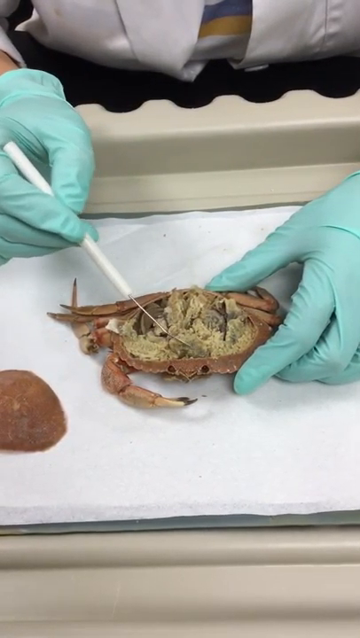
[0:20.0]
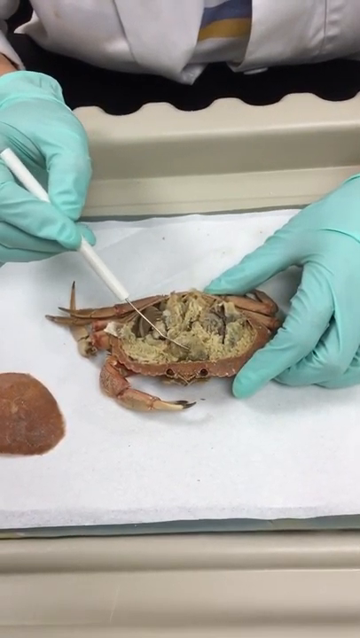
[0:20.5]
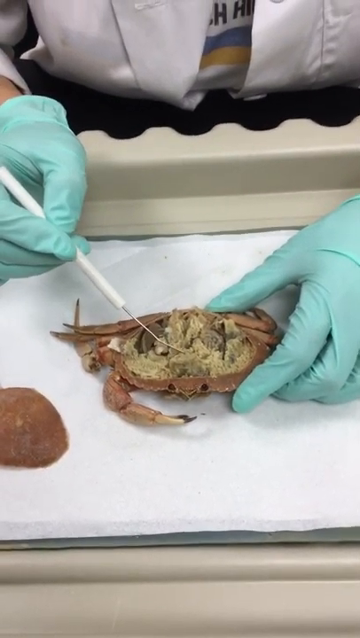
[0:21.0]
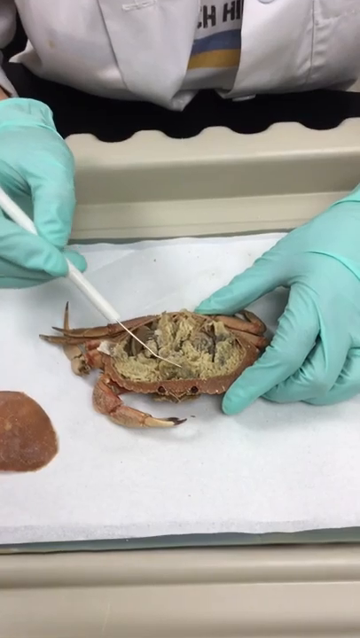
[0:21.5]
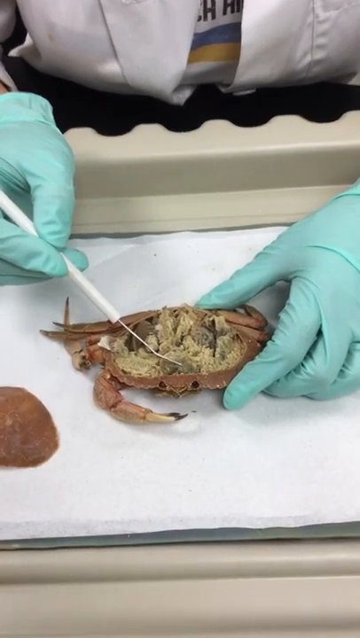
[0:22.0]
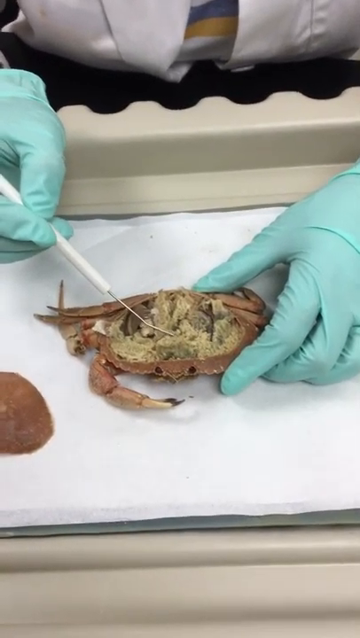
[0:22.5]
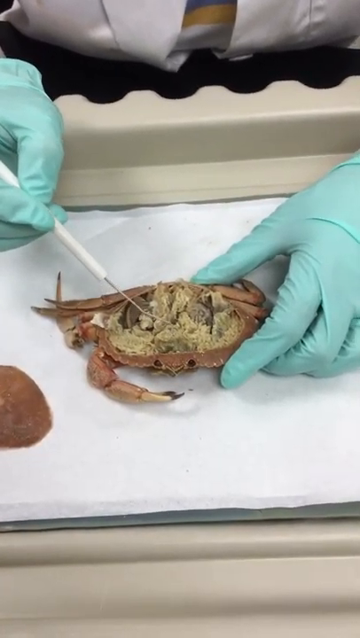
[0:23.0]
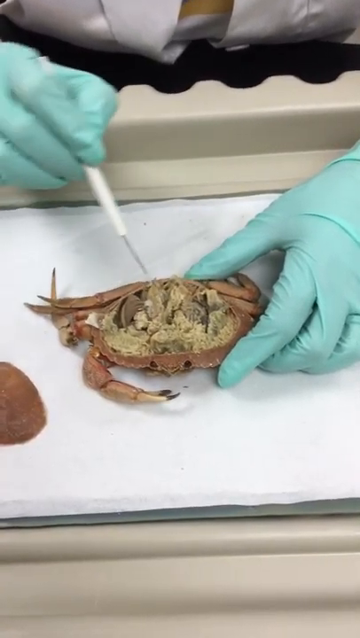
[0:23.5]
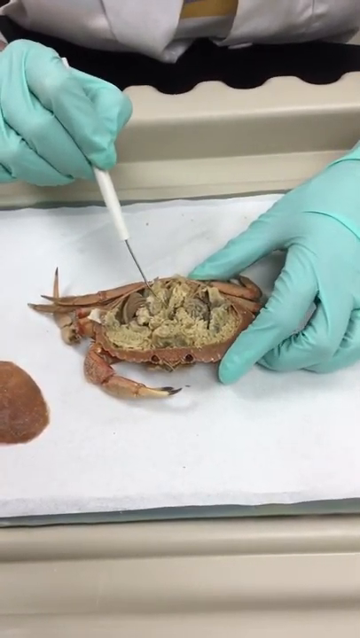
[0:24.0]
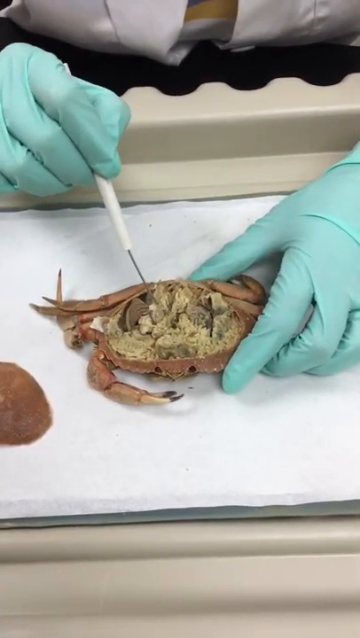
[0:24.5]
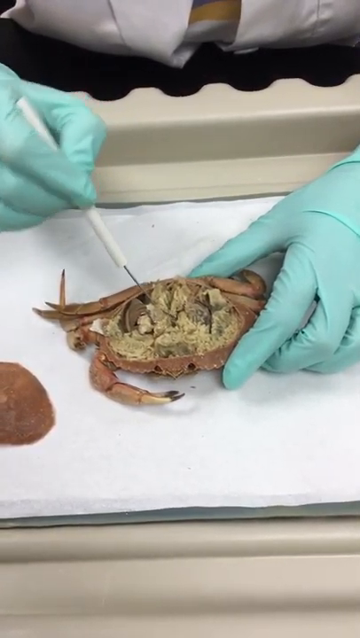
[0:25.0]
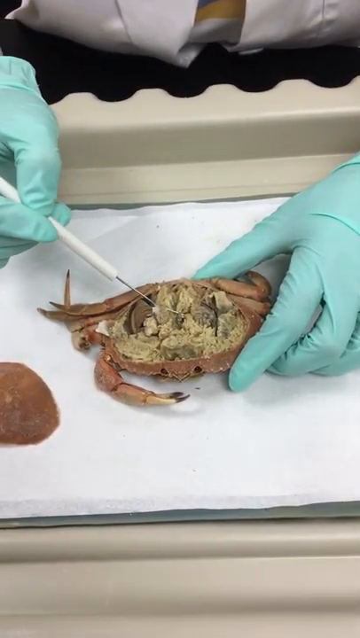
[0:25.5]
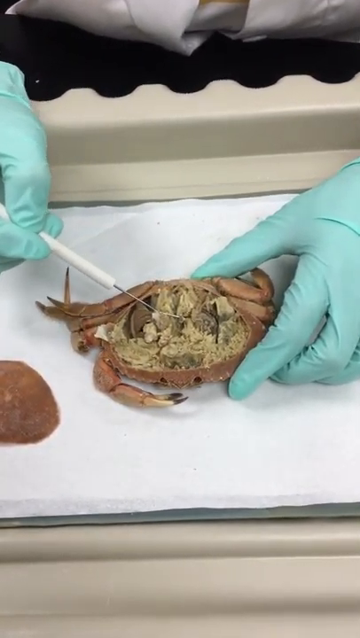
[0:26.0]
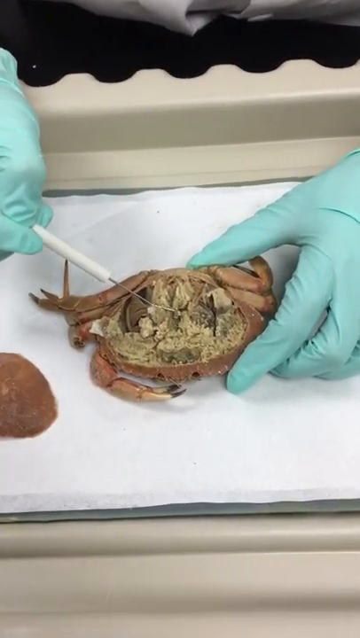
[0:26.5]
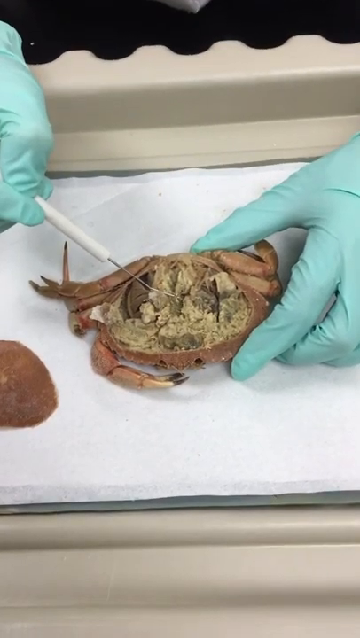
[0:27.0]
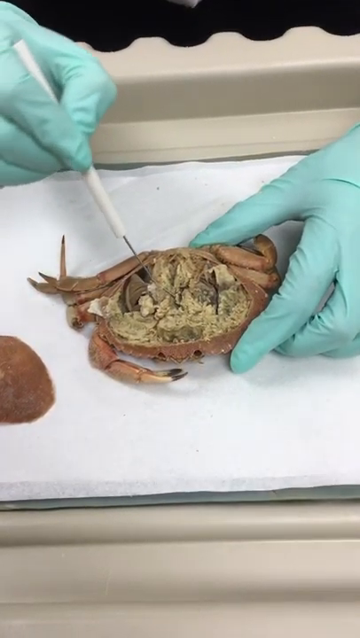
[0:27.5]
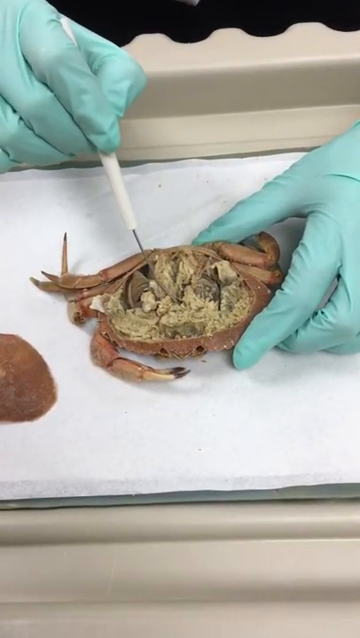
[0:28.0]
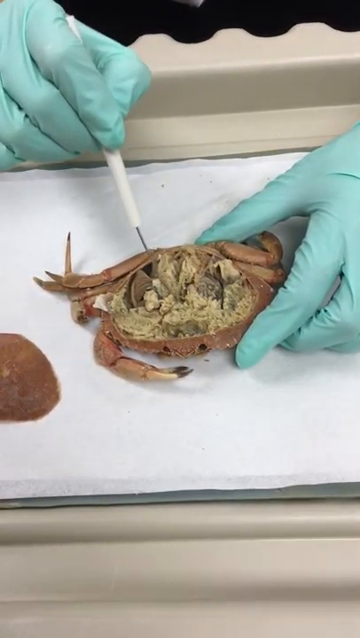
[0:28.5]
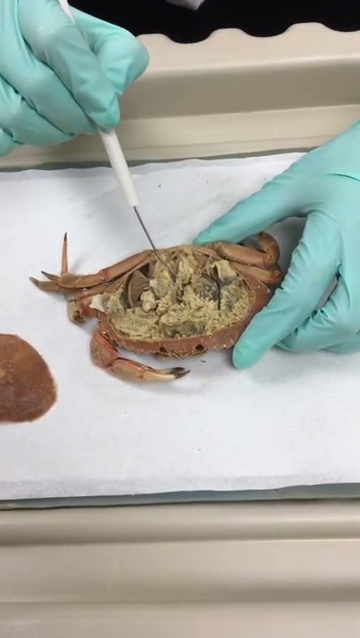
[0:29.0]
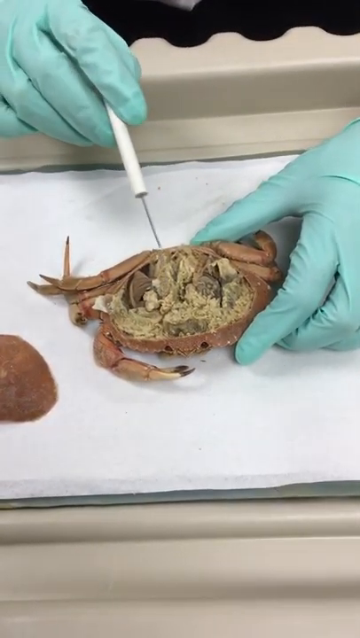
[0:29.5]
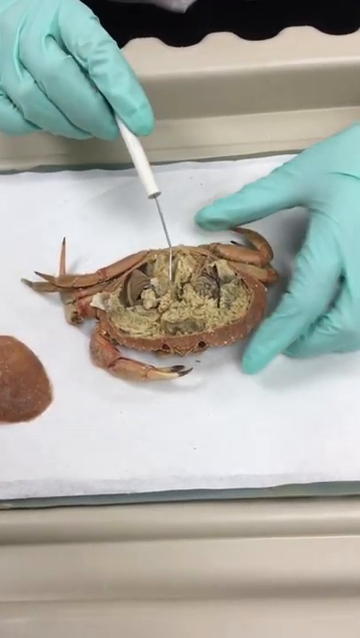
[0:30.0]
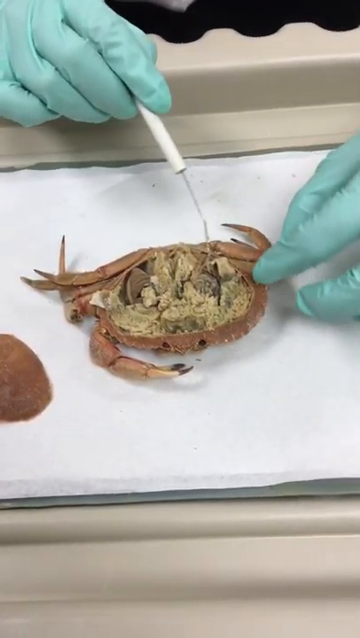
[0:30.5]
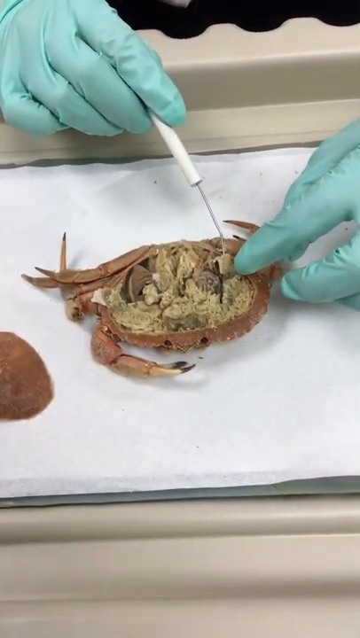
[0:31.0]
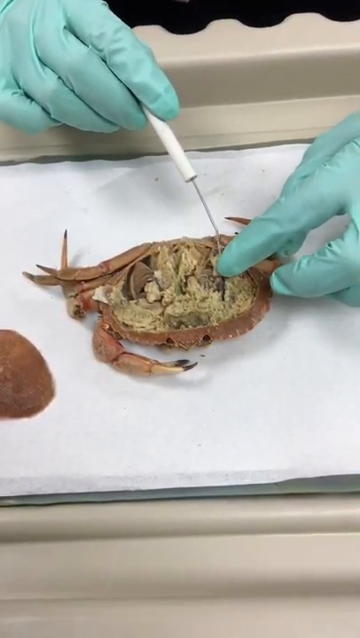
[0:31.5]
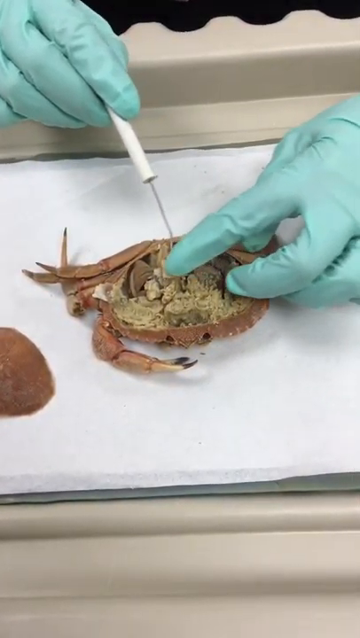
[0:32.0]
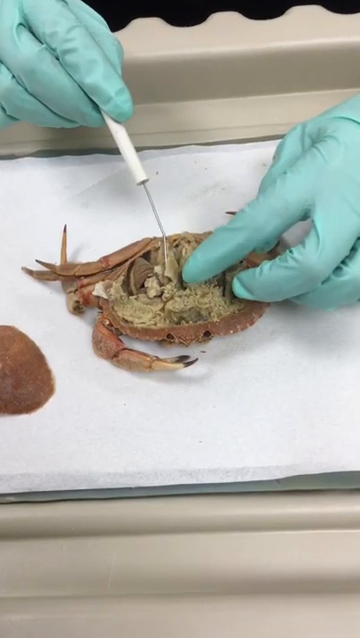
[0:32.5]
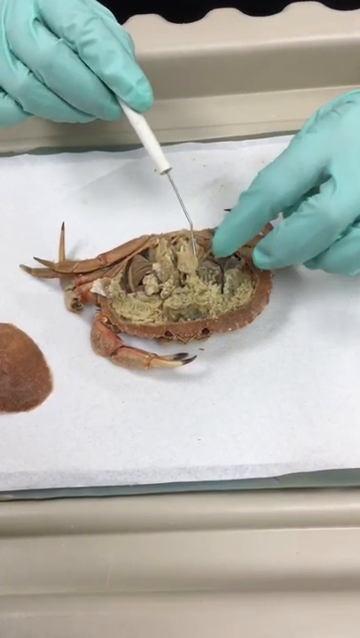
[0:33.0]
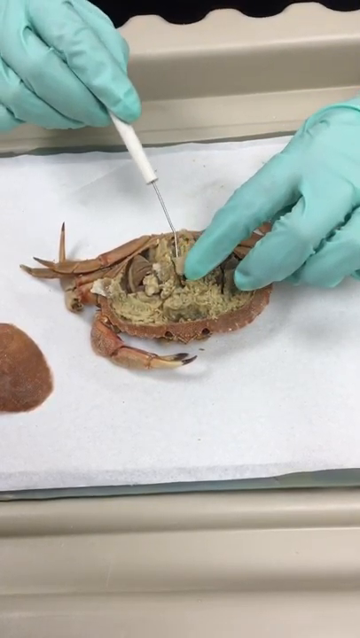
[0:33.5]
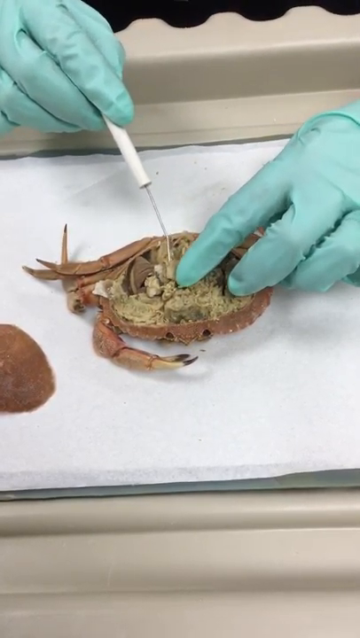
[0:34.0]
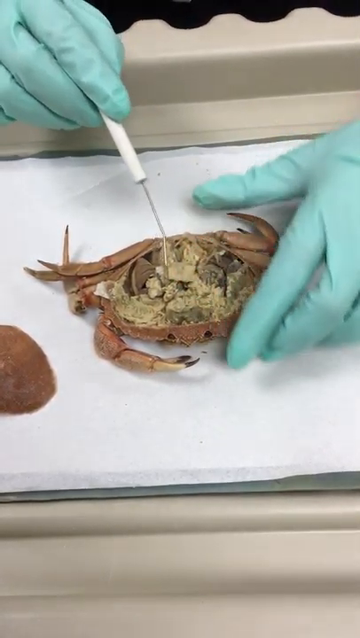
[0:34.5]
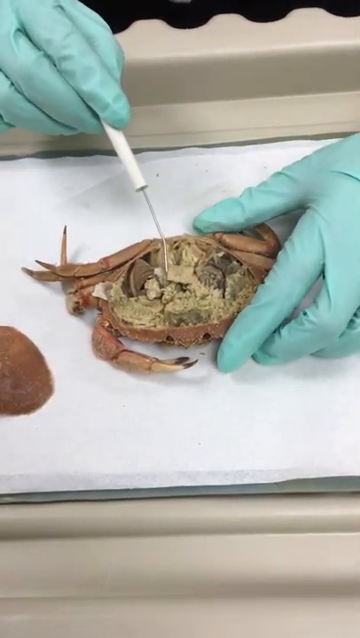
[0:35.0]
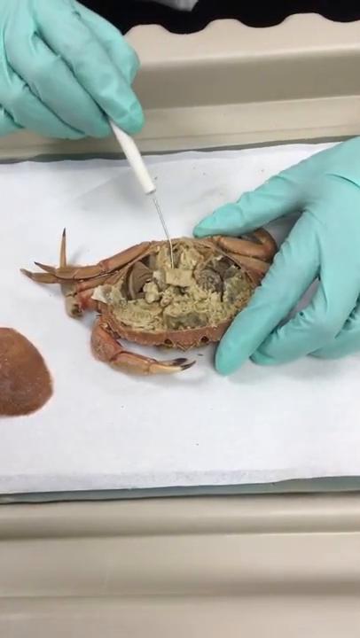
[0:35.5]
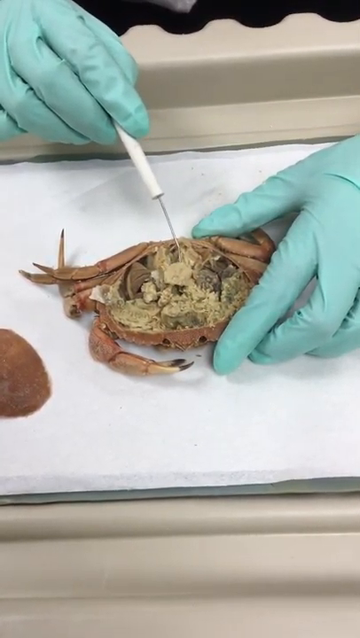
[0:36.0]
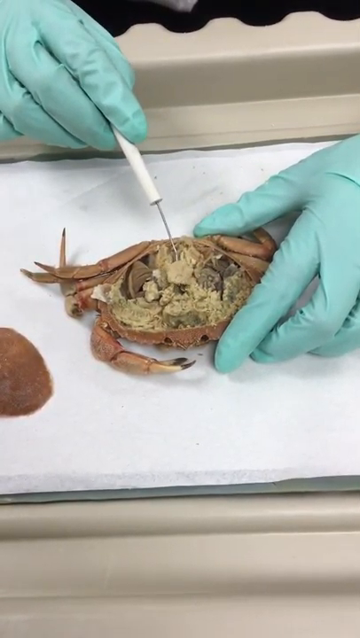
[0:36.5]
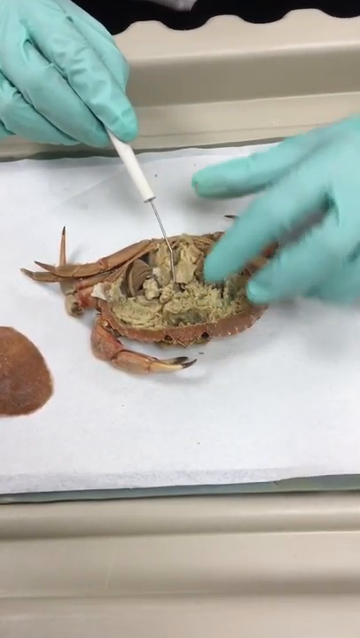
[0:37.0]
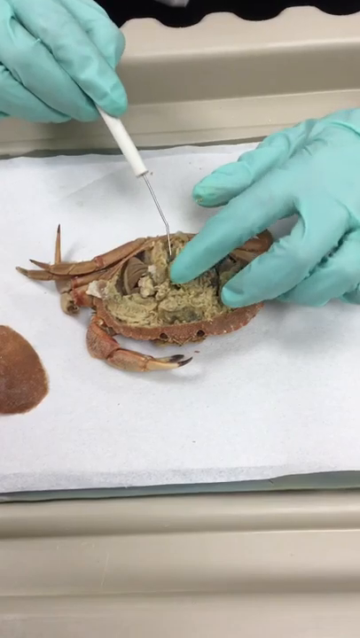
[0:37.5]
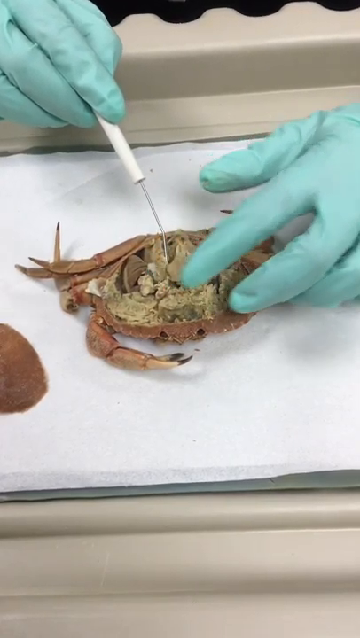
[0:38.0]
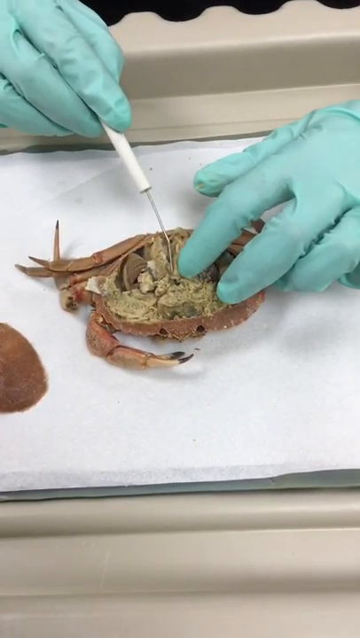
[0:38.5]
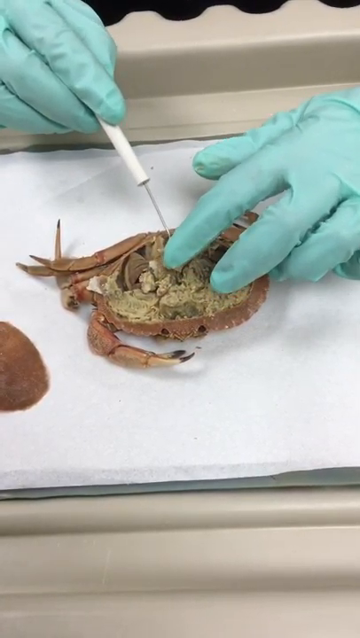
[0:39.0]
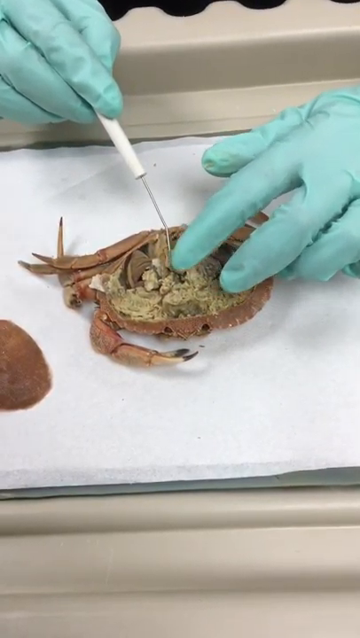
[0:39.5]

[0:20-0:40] A little red crab is being dissected, the top of its carapace carefully removed. Two gloved hands in light teal gloves hold and probe the crab. The left hand holds the crab itself while the right hand holds a tool with a long white straw-like handle and a long metal tip at the end. The tool probes around in the off-tan tissue inside the crab behind its eyes, lifting and pulling on various other tissues, as the left hand moves around pieces of shell that are sitting on top of the flesh. The dissector wears a white lab coat, with just a bit of a blue, yellow and white t-shirt visible underneath. The dissector's right wrist is semi-visible between the edge of the lab coat and the edge of the glove, suggesting the person is Caucasian. The crab faces the viewer and is seated on white absorbent paper.